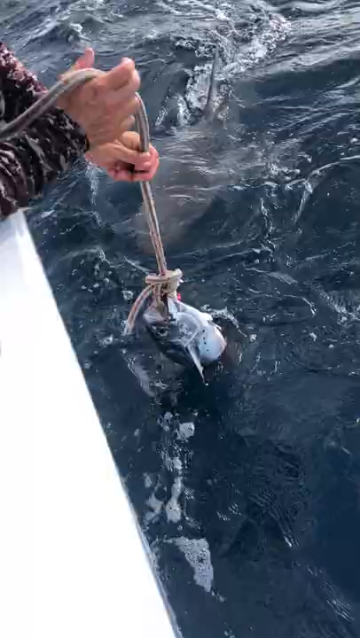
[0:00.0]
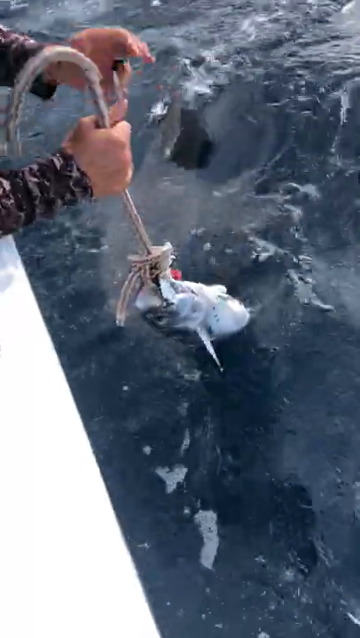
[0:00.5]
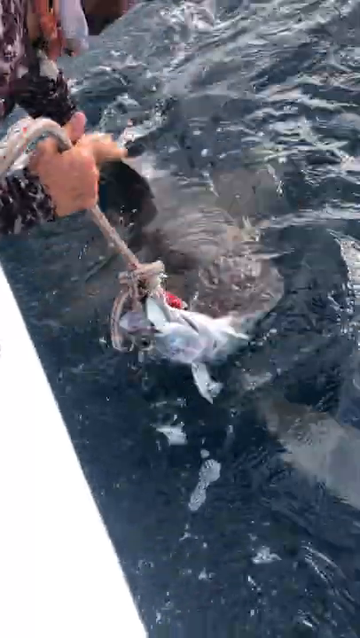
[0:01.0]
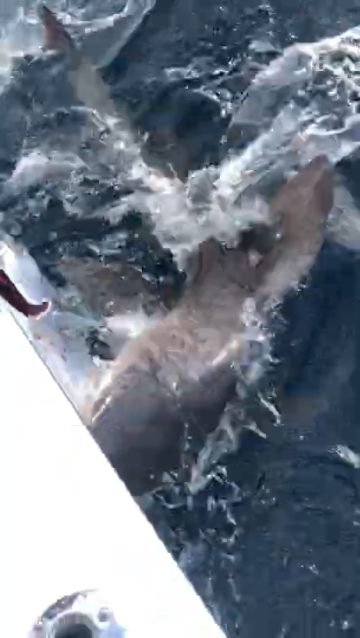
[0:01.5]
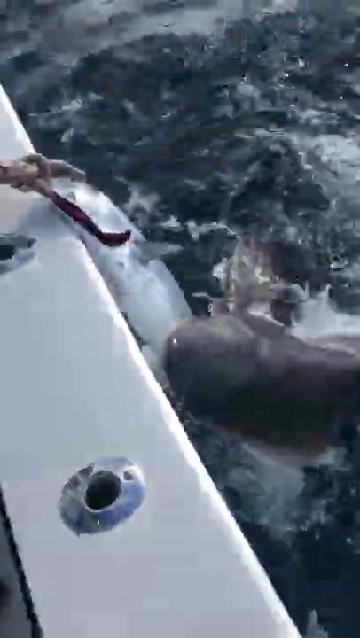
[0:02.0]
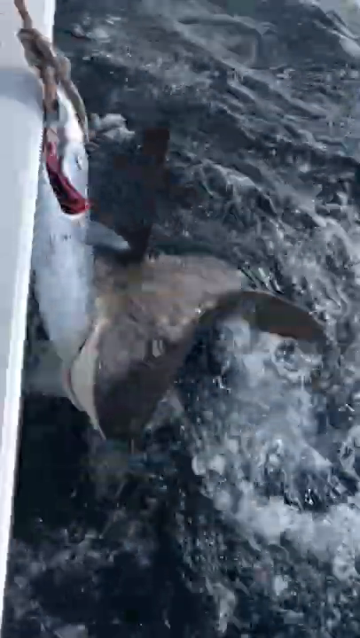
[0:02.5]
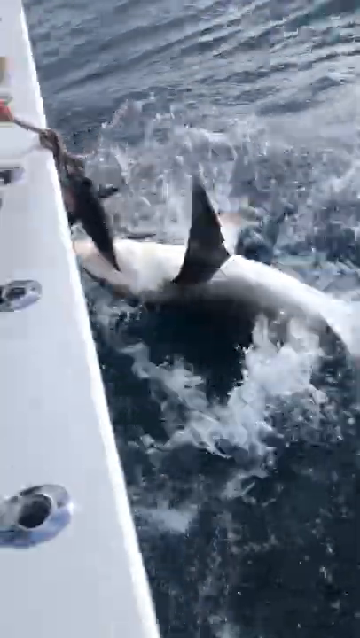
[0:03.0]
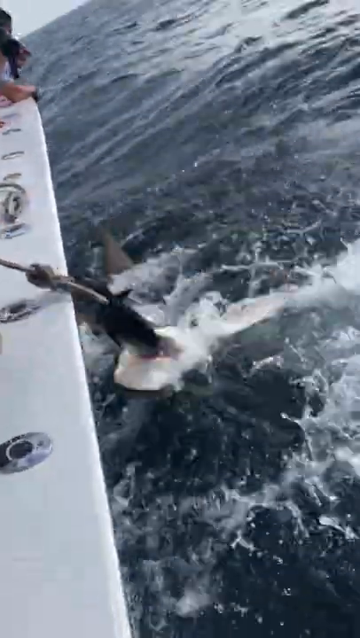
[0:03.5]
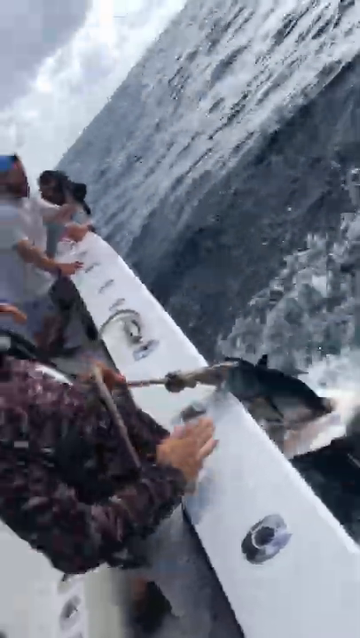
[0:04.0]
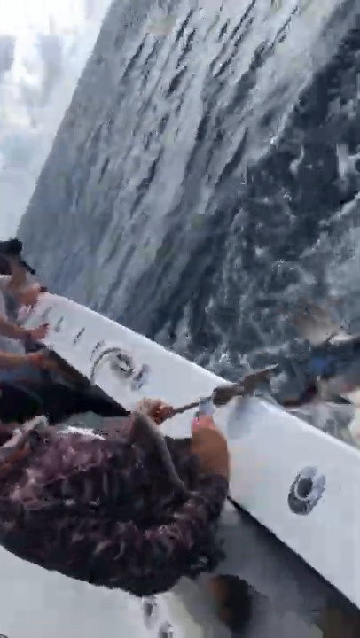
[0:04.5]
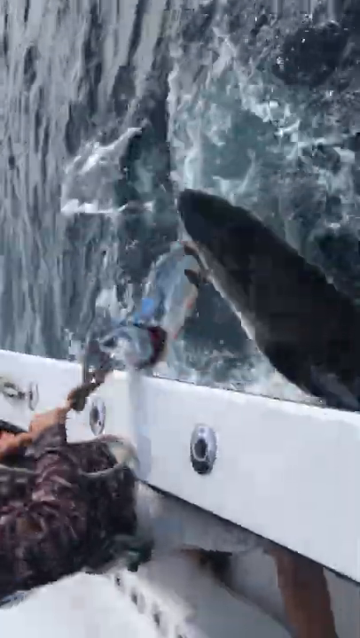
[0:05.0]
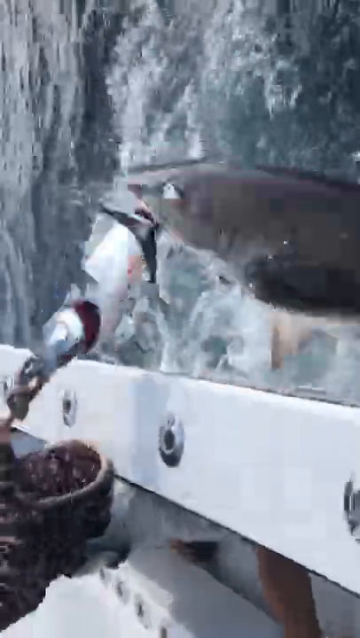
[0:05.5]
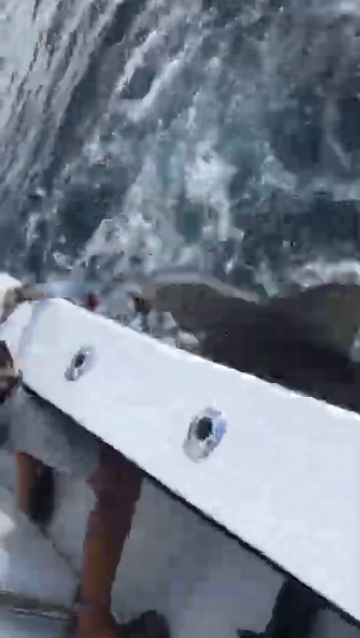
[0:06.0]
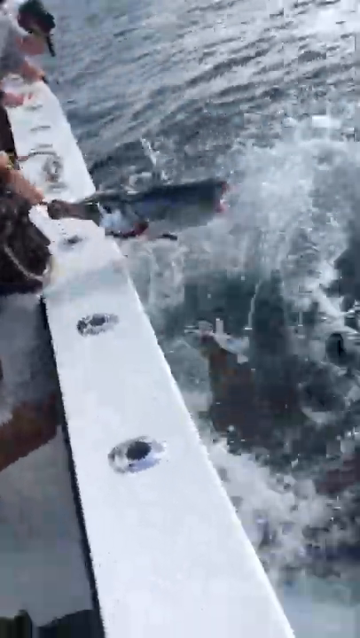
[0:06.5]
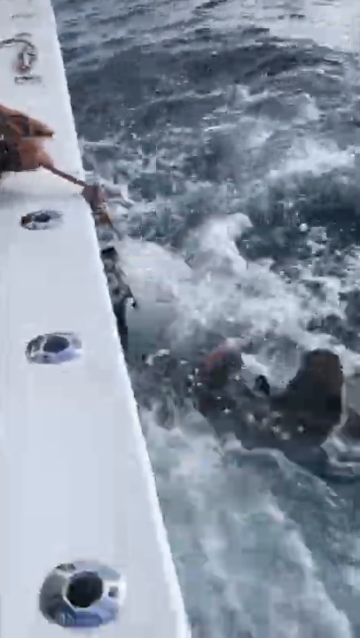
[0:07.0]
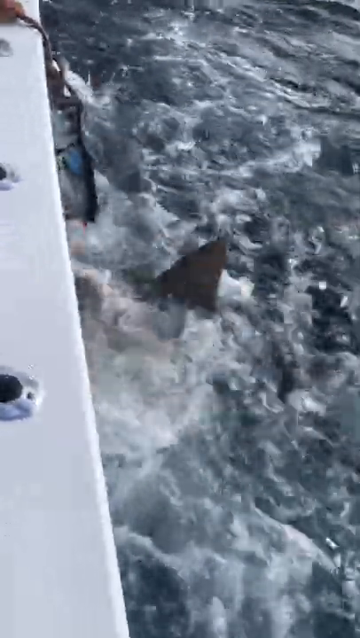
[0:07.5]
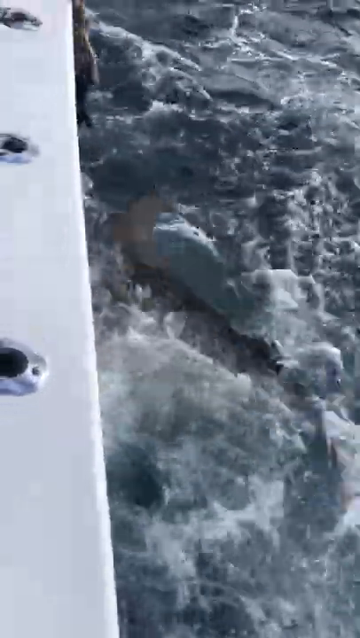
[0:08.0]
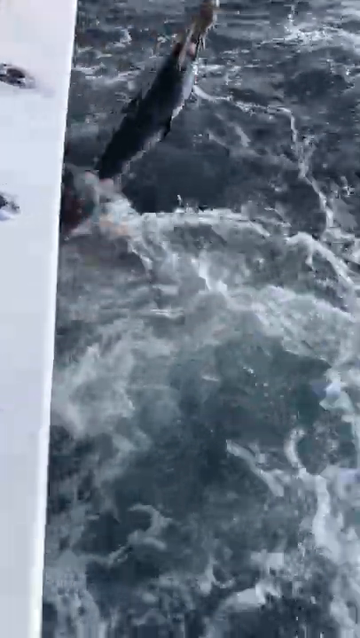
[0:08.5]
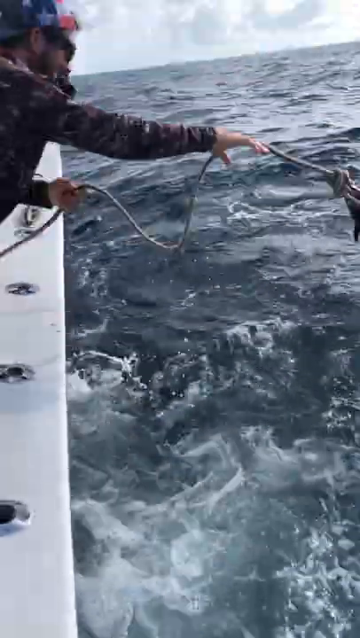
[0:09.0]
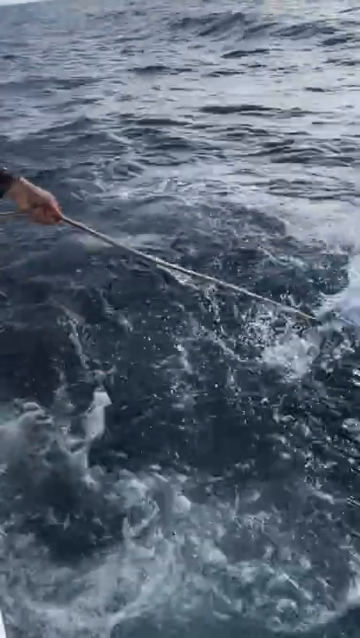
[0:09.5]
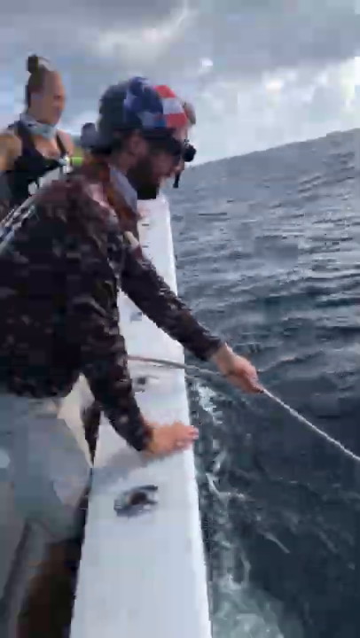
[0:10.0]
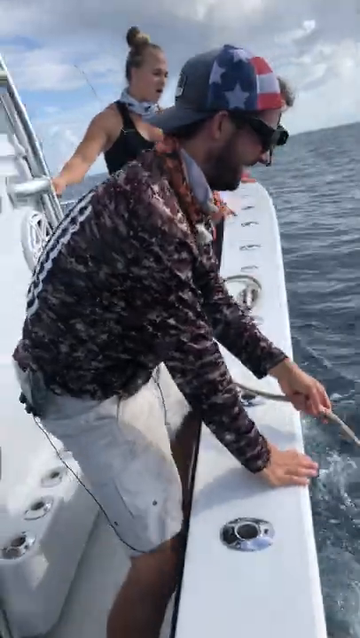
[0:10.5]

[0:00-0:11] The view is from off the side of a boat, apparently on the ocean. At the very beginning, a man quickly reaches his hand down into the water and draws it back because the shark is getting closer. A large fish is somehow connected to a length of rope, its snout seemingly tied with the rope, and a shark in the water attacks it, going after it. The fish appears to be dead. The man is holding the rope of the fish. The scene at first seems very alarming and violent, but by the end the camera moves up a bit and shows the man smiling; he is doing this intentionally. The people on the boat seem to be shark hunters or possibly people trying to get videos of sharks. The man wears what looks like a camo long-sleeve shirt and a ball cap with an American flag print. At the very end, a small shark icon appears in the bottom right-hand corner of the screen, suggesting these people possibly make a series of videos of sharks.